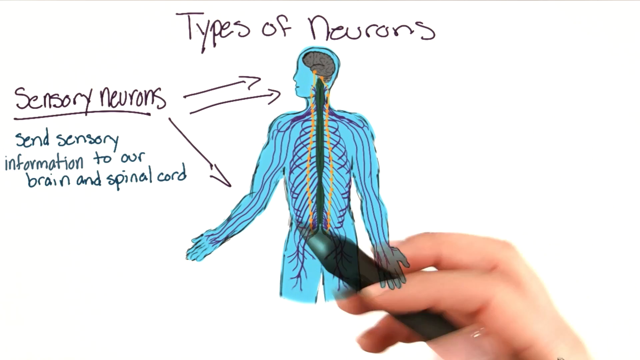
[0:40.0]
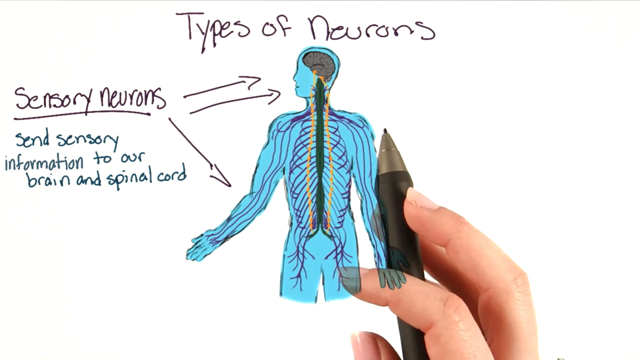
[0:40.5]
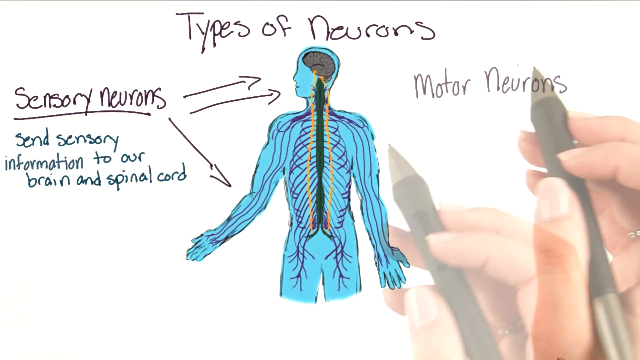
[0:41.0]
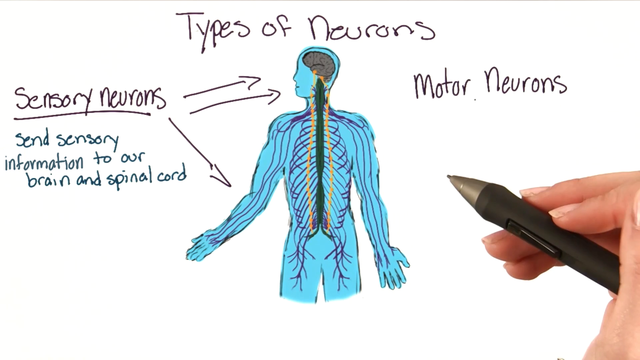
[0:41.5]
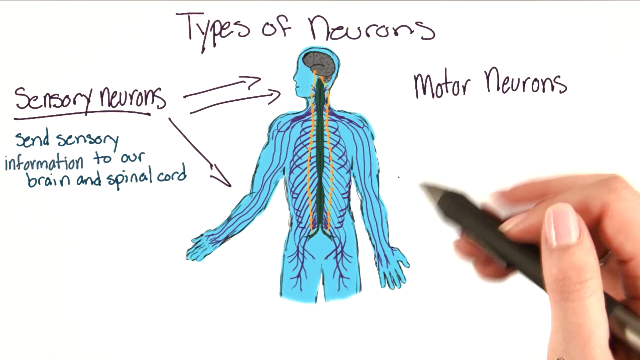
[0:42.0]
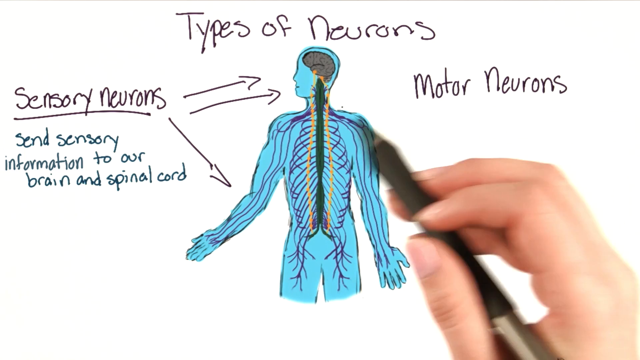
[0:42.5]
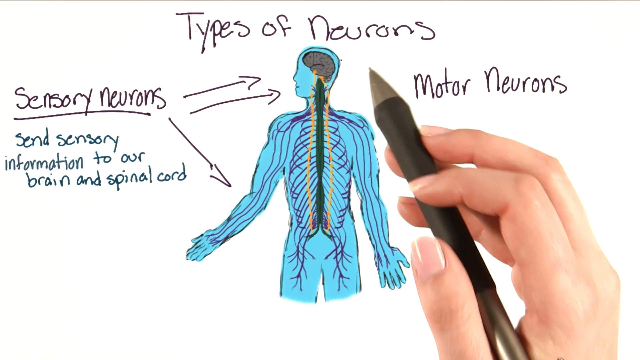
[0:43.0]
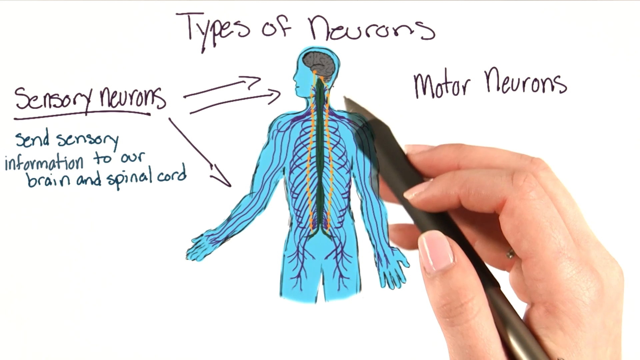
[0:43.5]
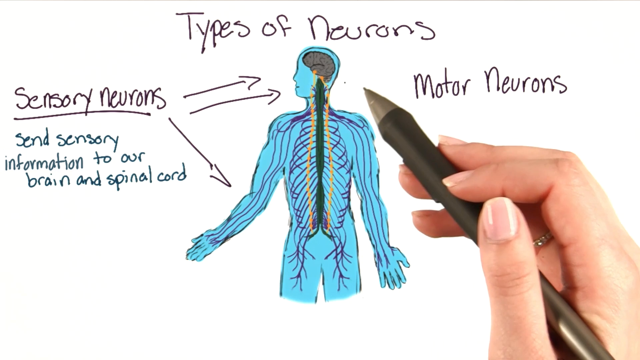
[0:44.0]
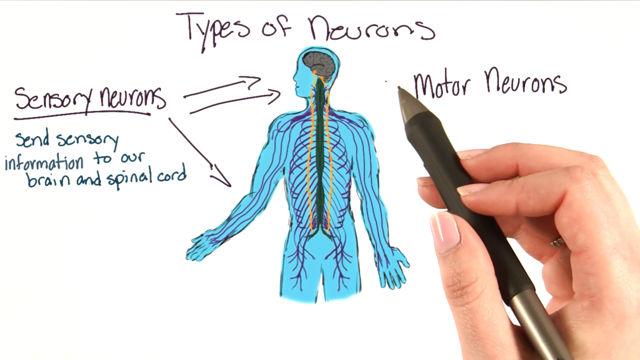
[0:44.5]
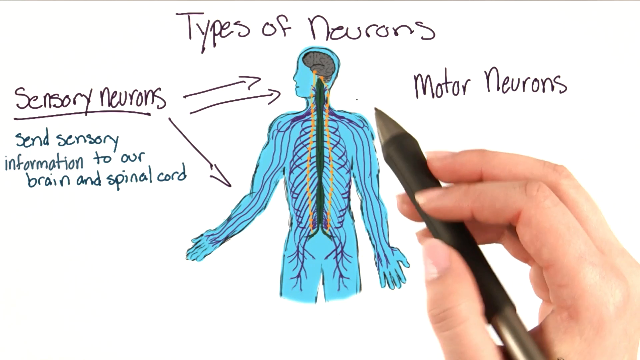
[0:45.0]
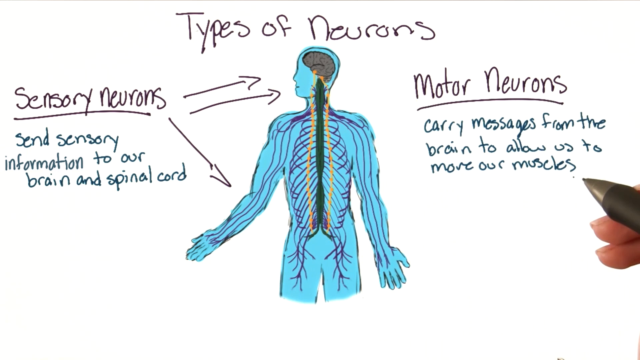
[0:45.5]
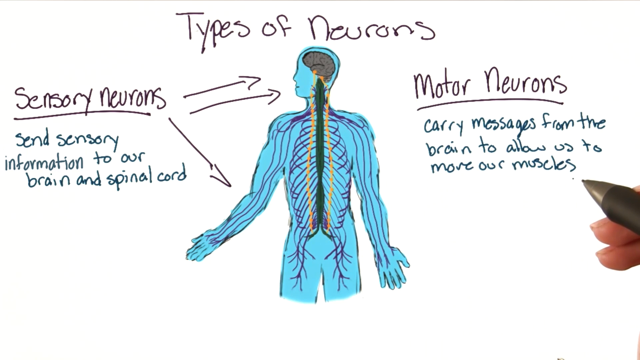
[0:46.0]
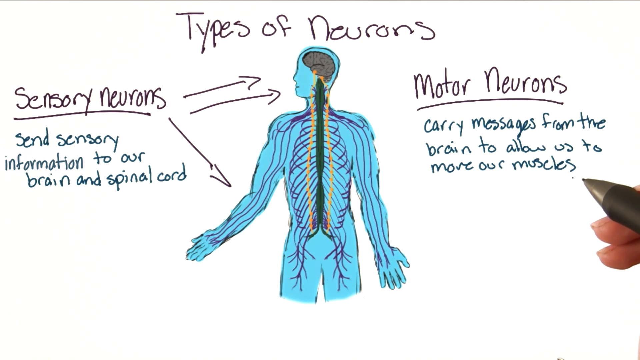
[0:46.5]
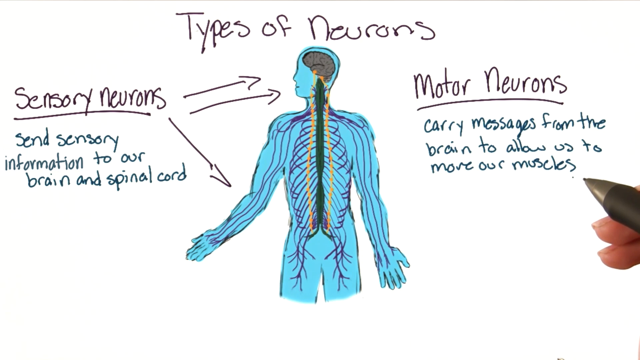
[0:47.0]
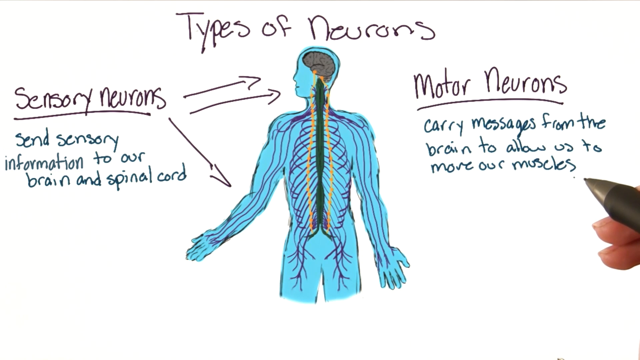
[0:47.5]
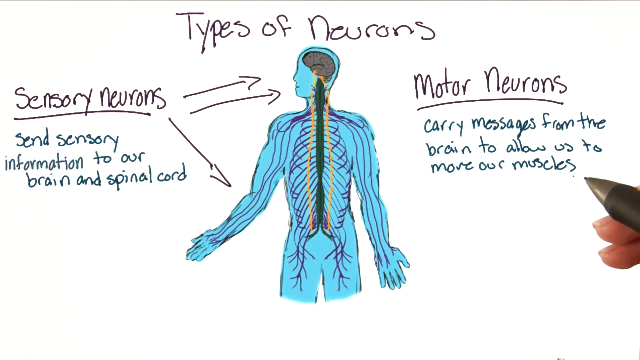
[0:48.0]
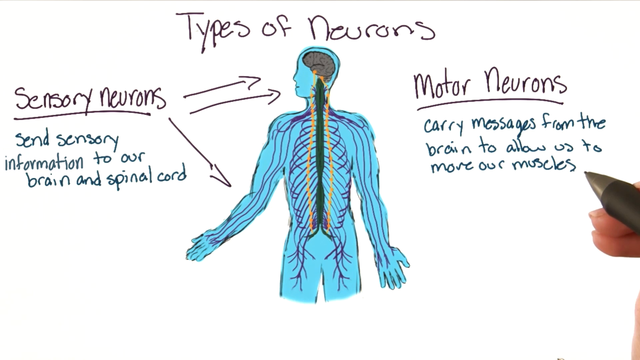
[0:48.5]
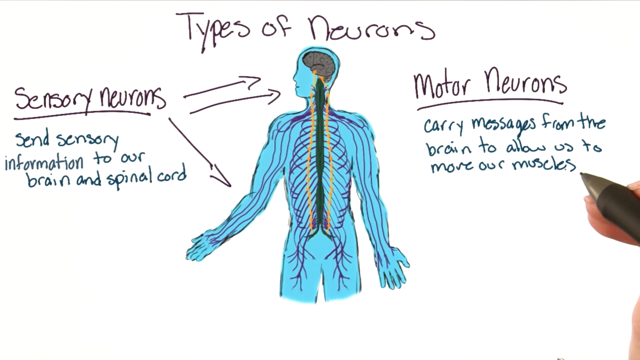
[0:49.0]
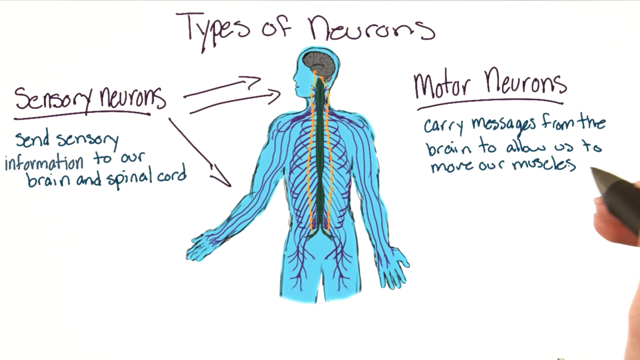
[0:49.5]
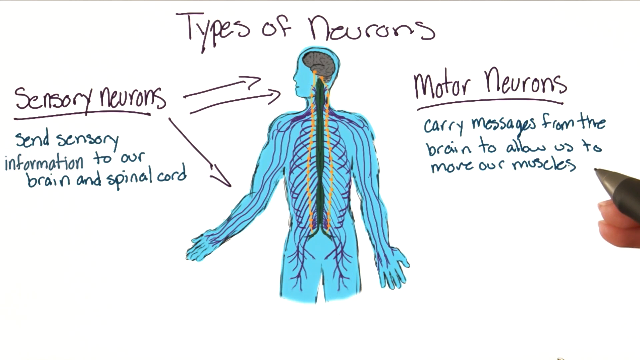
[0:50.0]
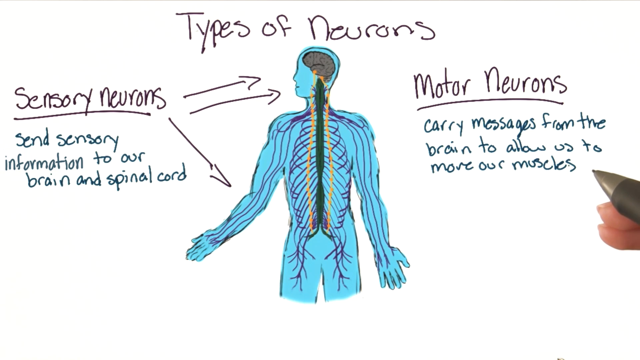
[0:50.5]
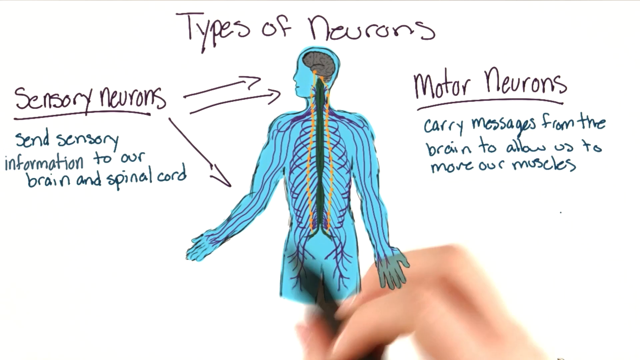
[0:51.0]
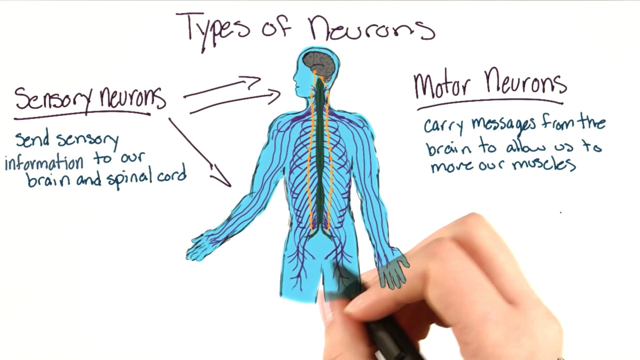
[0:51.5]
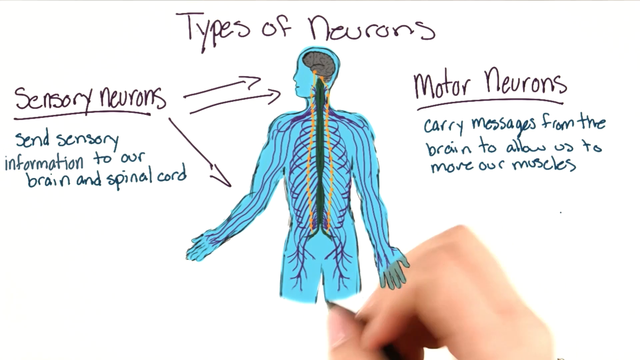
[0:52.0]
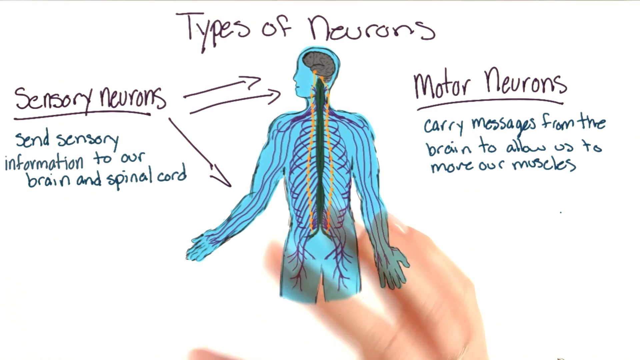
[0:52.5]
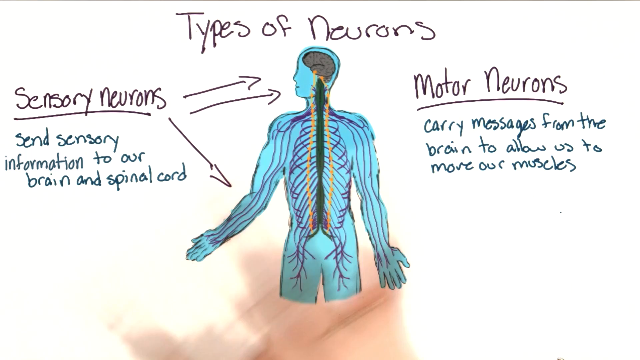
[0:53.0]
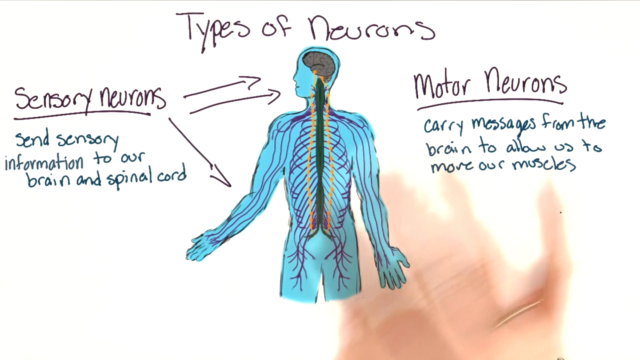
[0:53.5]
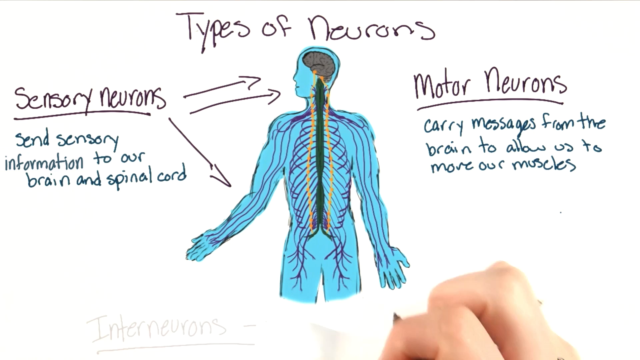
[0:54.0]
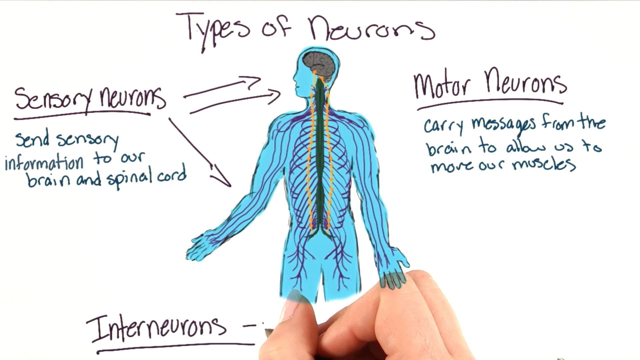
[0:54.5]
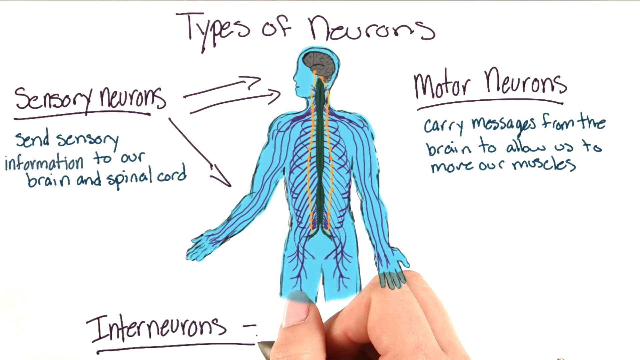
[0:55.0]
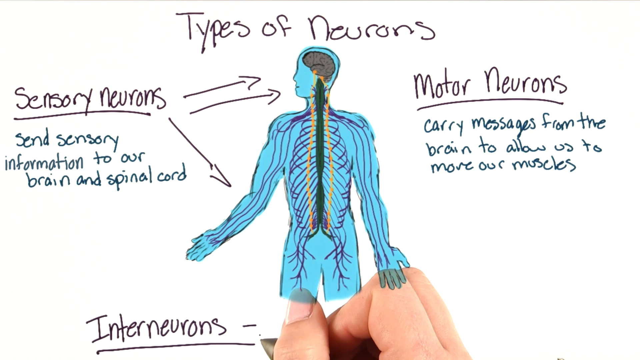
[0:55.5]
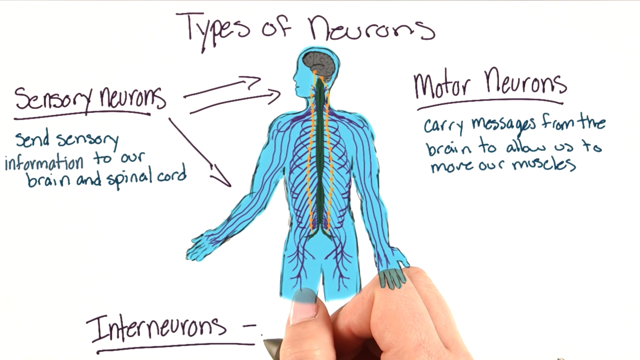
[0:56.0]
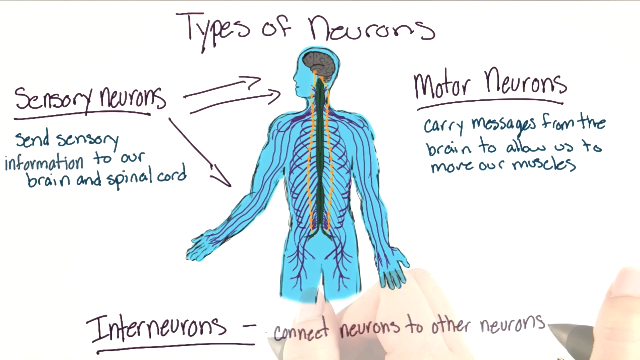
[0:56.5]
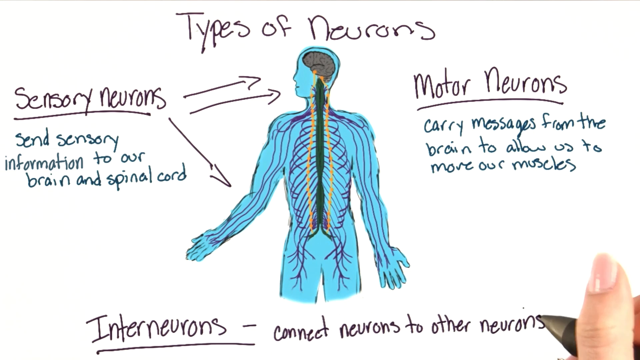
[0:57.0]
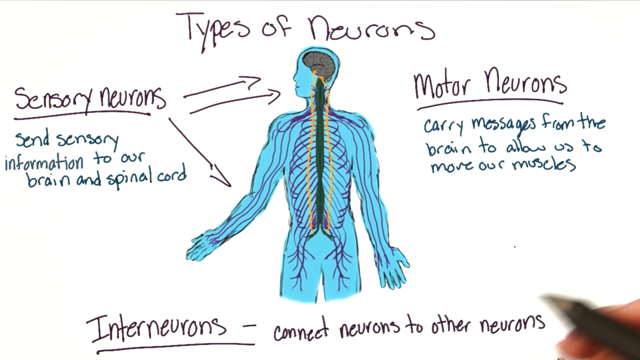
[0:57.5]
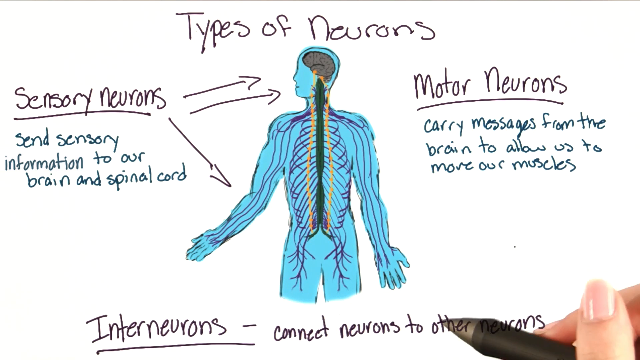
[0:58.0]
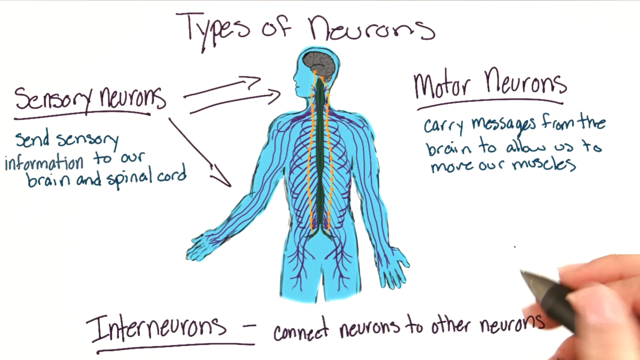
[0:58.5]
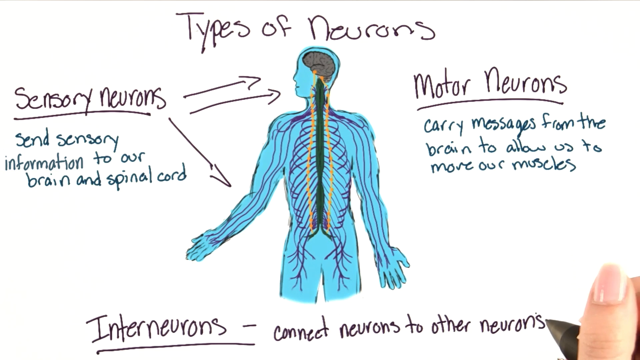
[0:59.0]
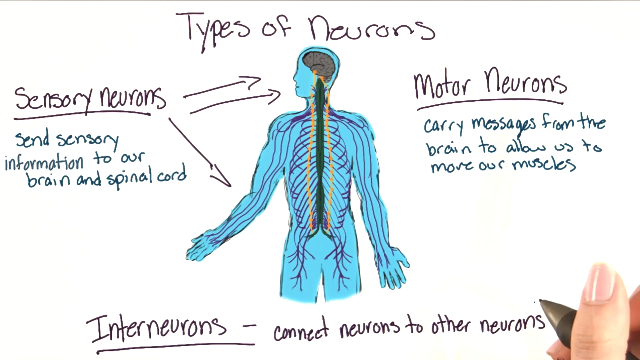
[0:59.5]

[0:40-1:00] A person holds a pen on the right of the screen and points with it to the diagram of a body in the middle. The body is blue, showing its outline and, inside, the brain, spinal cord, and nerves and neurons running through it. Above the body it says "types of neurons." To the left it says "sensory neurons," with two arrows pointing at the head and one pointing down to the arm on the left, which is slightly bent upward; below that it says "sensory neurons send sensory information to our brain and spinal cord." On the right, the pen has now written "motor neurons," underlined, and below it "carry messages from the brain to allow us to move our muscles." The hand with the pen waves above as if talking. The hand is a female hand with a ring on the fourth finger. Below, she has now written with the pen "Interneurons," underlined, followed by a dash and "connect neurons to other neurons."